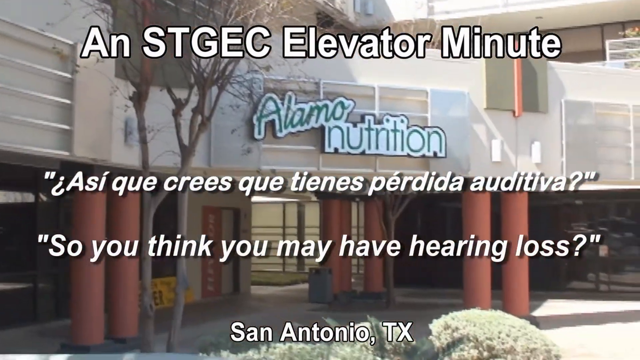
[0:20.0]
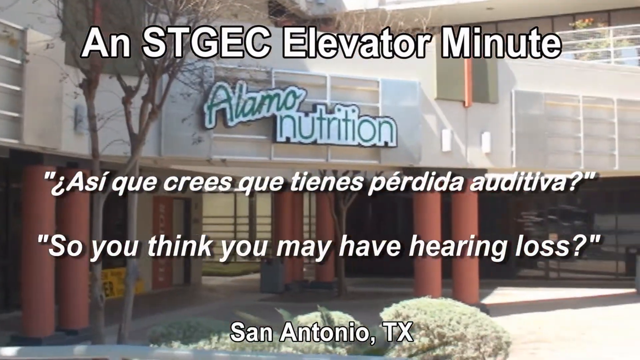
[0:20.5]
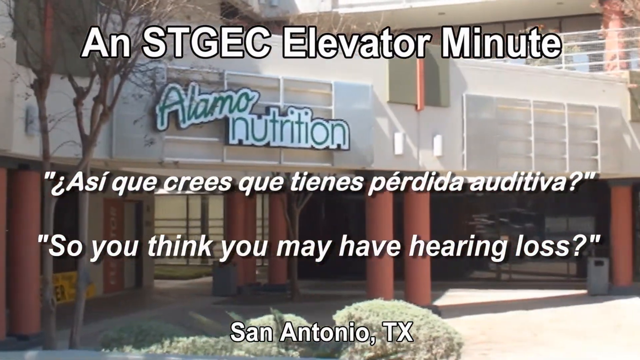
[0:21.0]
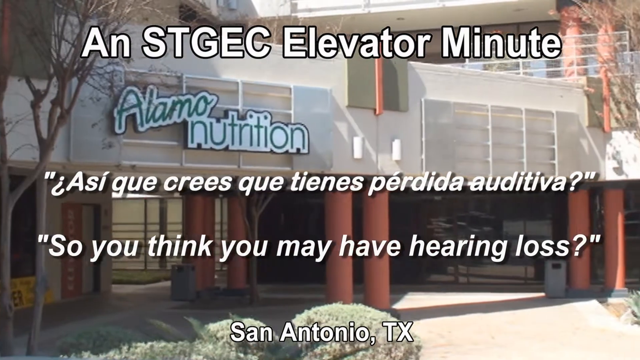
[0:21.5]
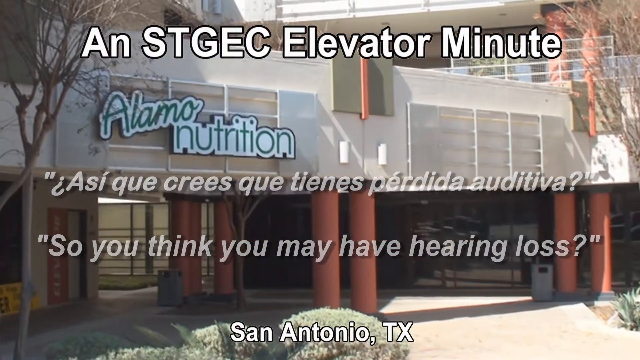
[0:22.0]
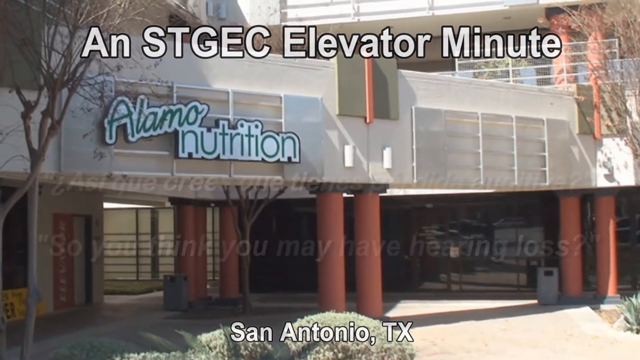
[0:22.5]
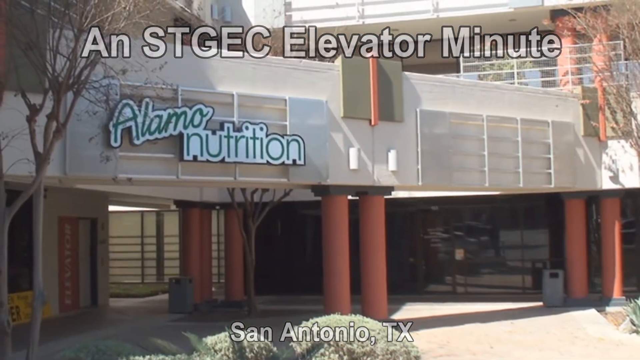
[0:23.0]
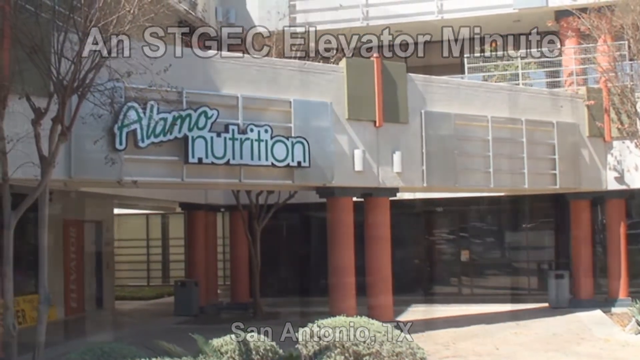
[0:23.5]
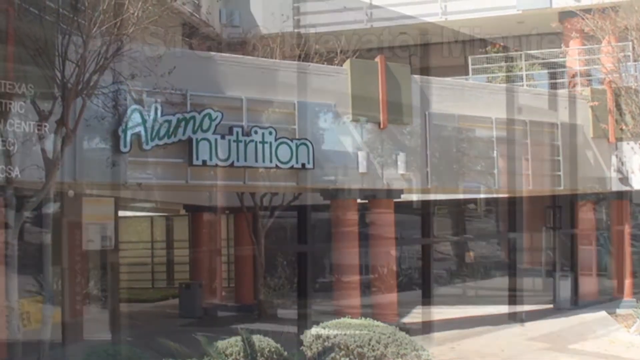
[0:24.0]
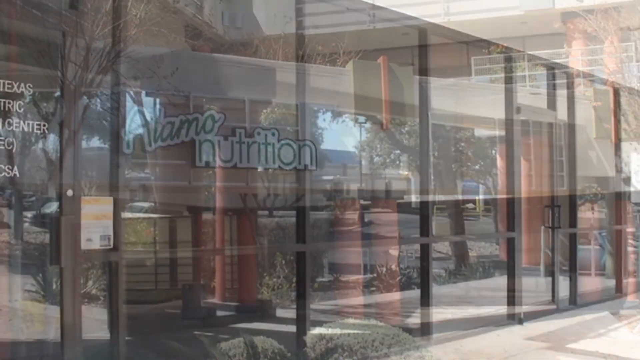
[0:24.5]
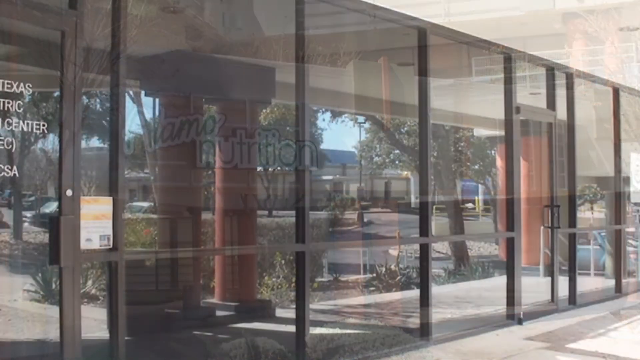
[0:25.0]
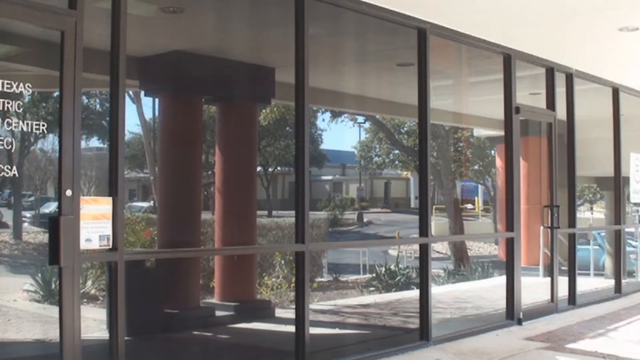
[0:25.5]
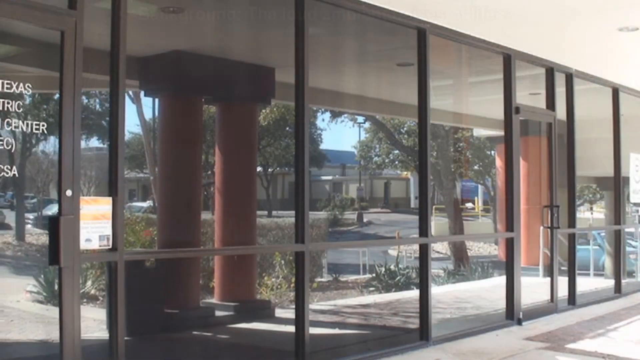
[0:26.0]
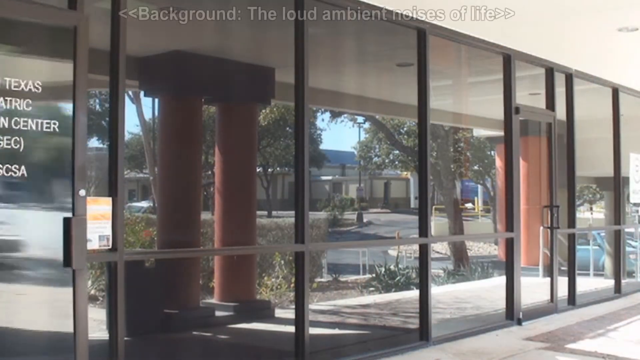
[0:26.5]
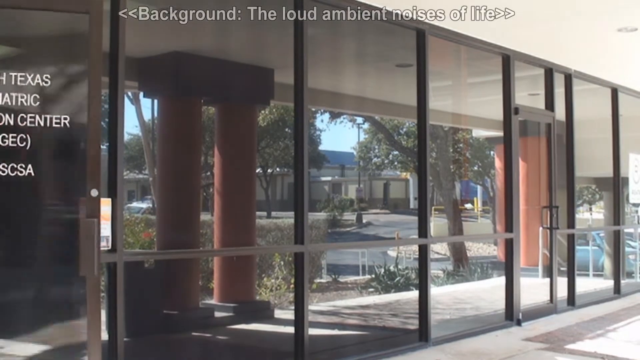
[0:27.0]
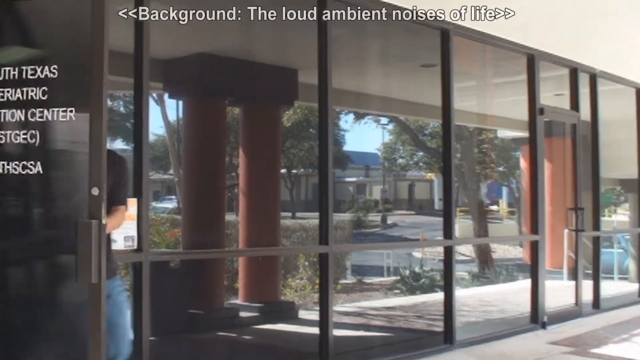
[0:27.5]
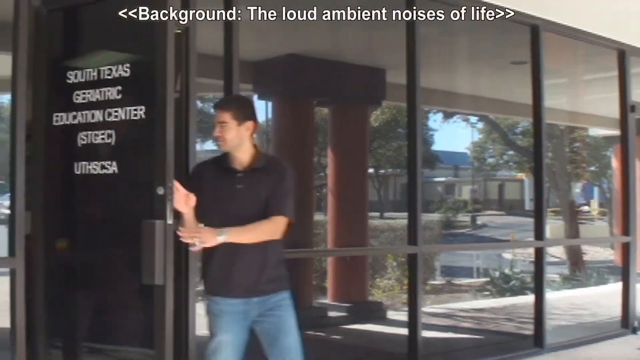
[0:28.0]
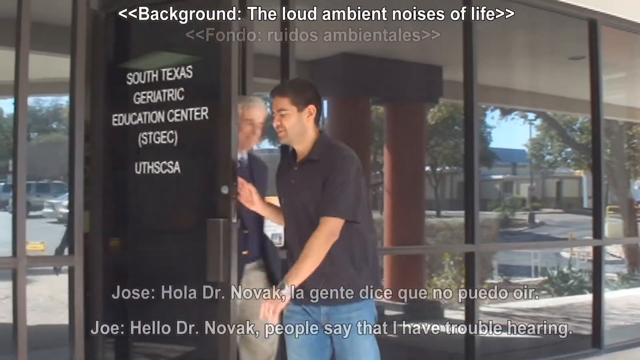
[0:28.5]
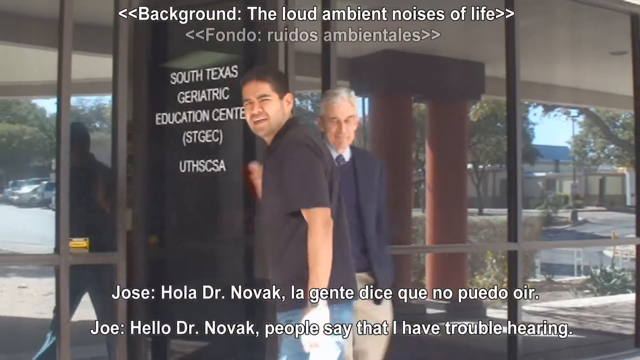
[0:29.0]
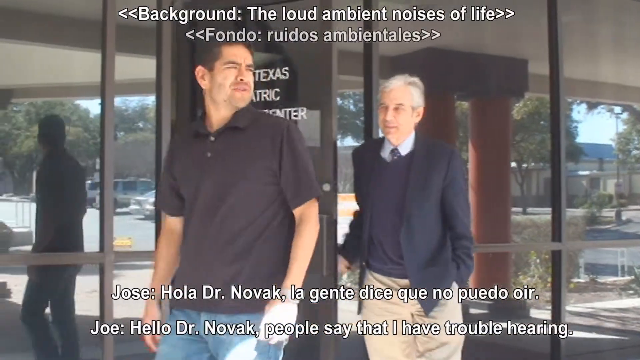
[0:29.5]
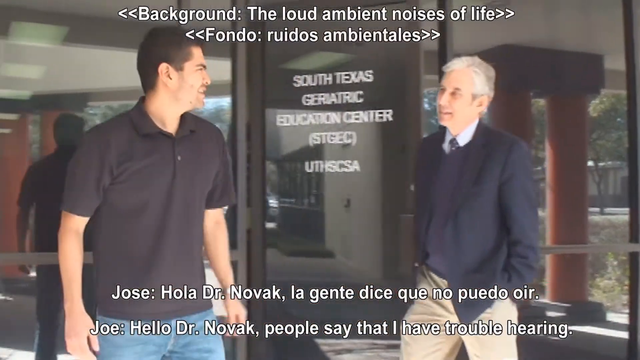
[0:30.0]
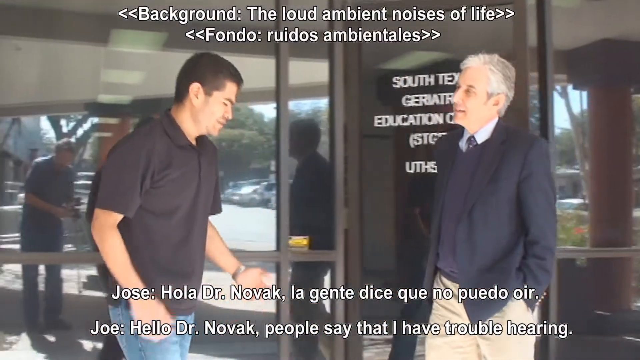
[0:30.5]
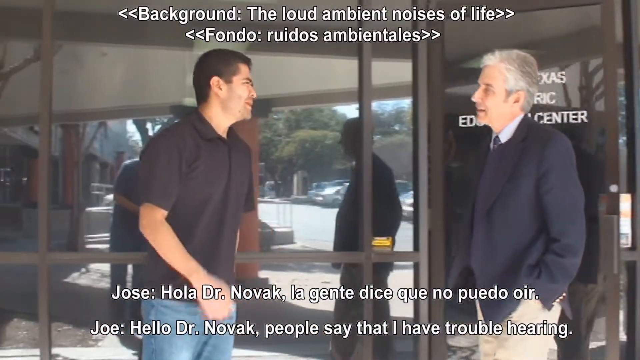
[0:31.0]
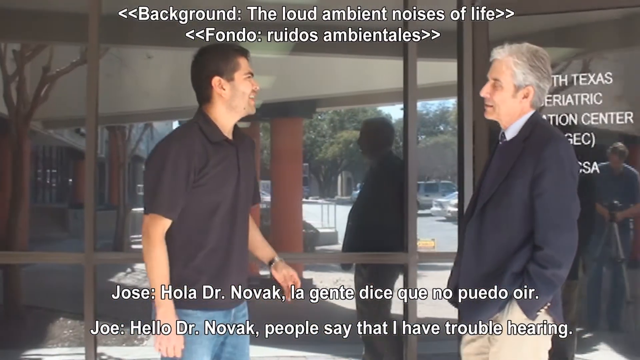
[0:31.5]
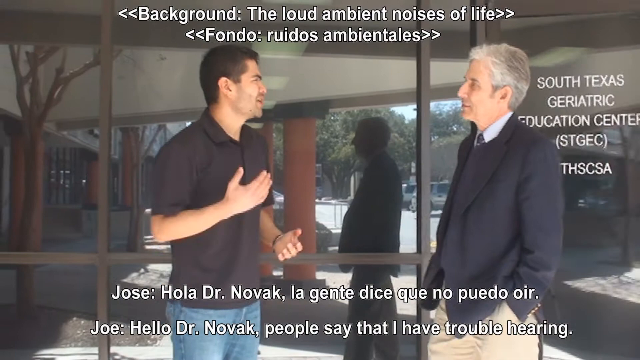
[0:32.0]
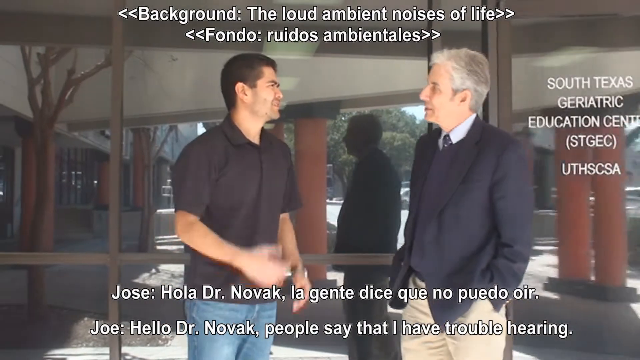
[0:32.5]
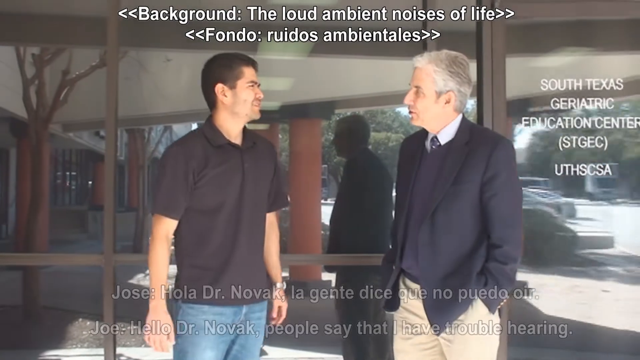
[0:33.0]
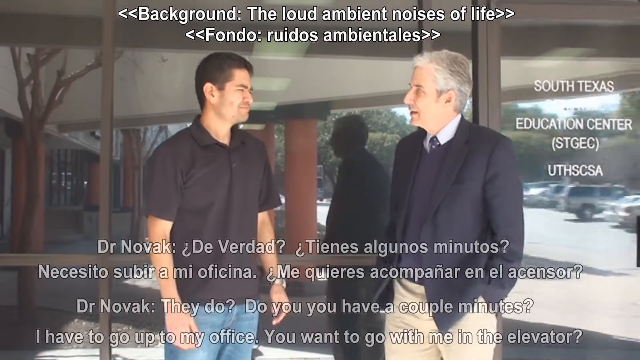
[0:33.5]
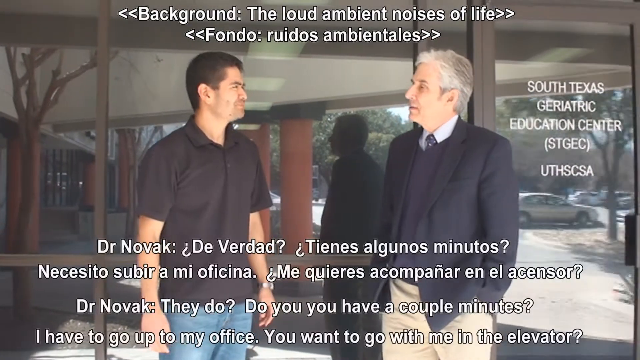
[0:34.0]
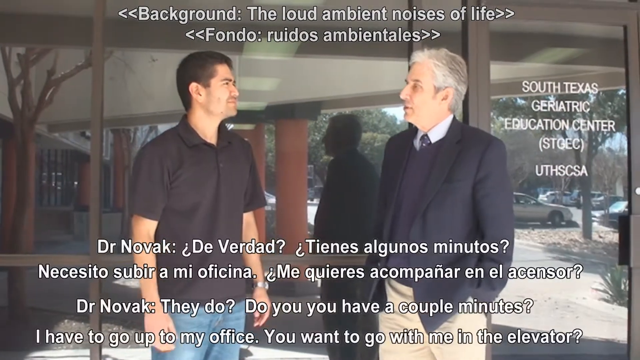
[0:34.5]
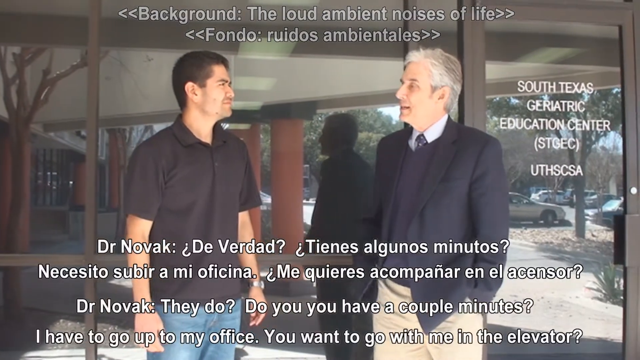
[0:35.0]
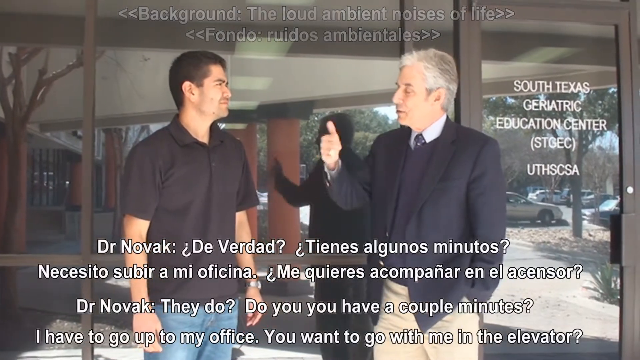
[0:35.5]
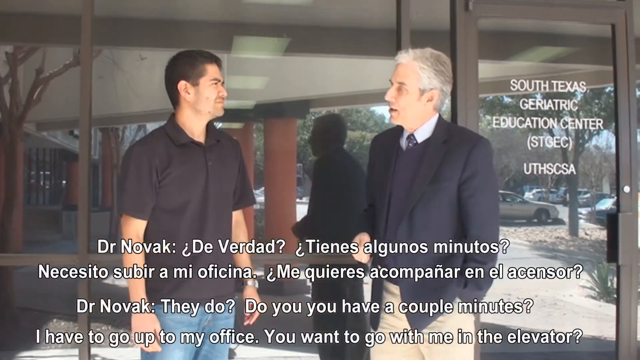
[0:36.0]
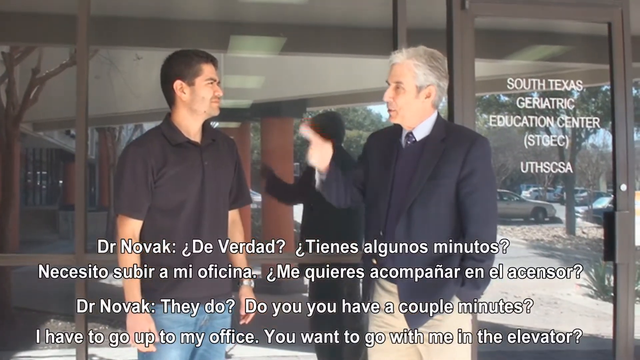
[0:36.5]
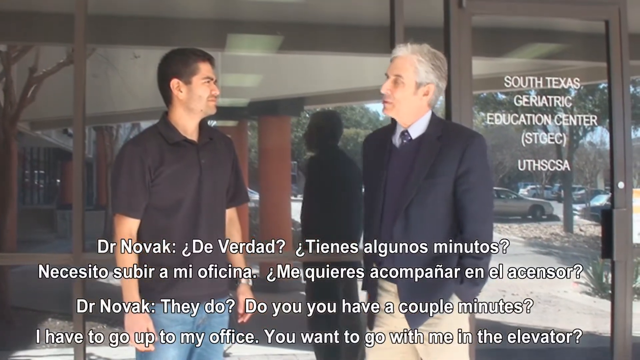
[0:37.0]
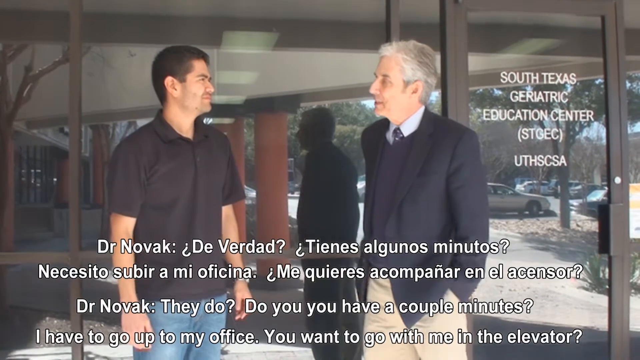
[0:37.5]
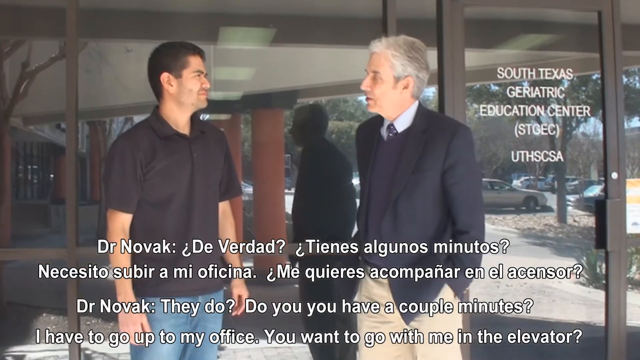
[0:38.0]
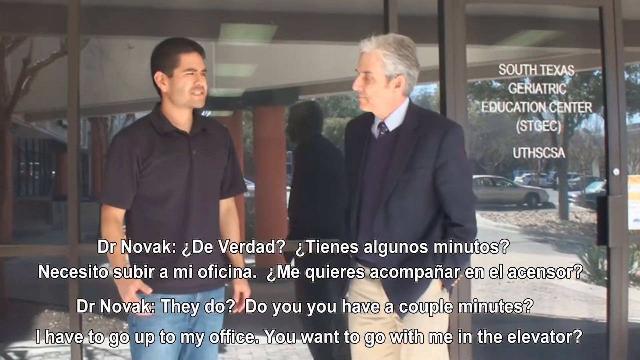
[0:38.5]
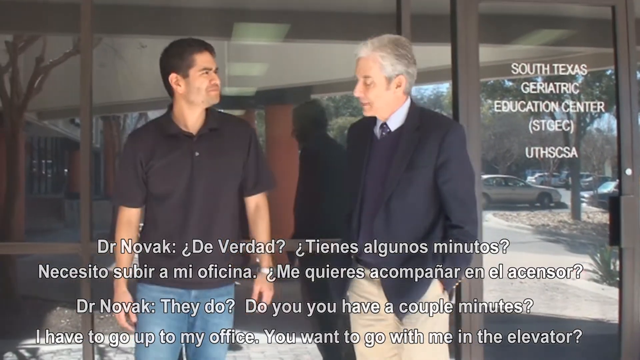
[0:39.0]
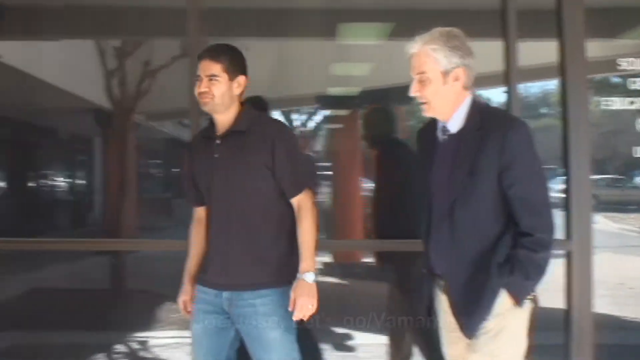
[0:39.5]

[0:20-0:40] A title appears, followed by two texts at the bottom in white font that read "do you think you might have a hearing loss". There is a glimpse of a gallery with a shop called Arma Nutrition, which has two orange columns. A man walks out of the store. Two people are there; one, probably a doctor, wears a suit. Behind them is the South Texas Geriatric Education Center. In the subtitles, Joe greets Dr. Novak and says people say he has trouble with hearing, and Dr. Novak asks if he has a couple of minutes, saying he has to go up to his office and asking whether Joe wants to go with him in the elevator. The doctor moves his head up and to the right, as if suggesting something.